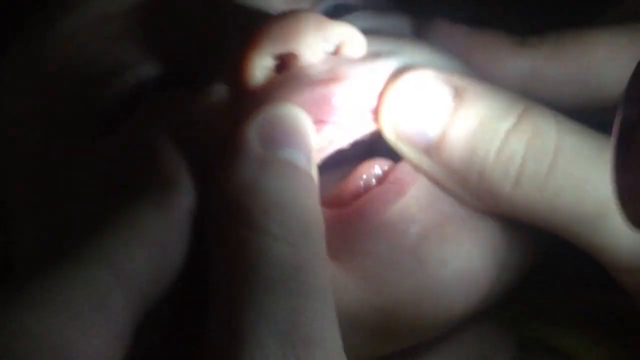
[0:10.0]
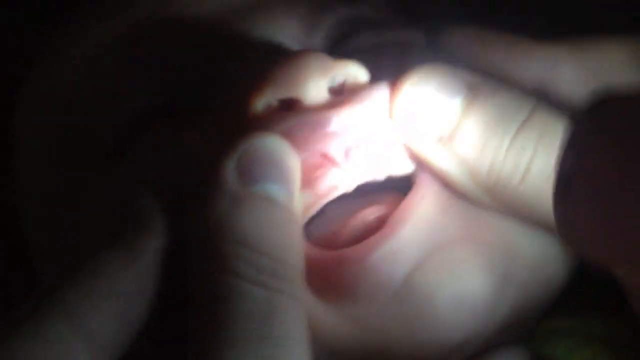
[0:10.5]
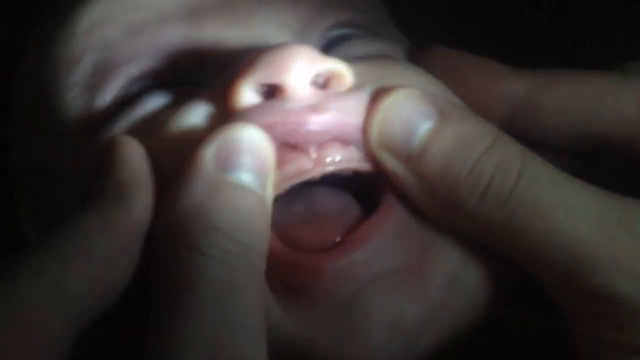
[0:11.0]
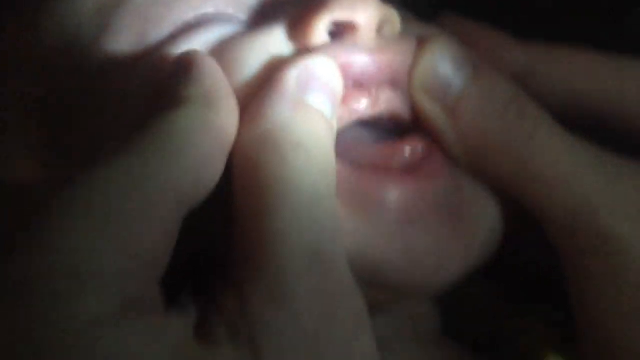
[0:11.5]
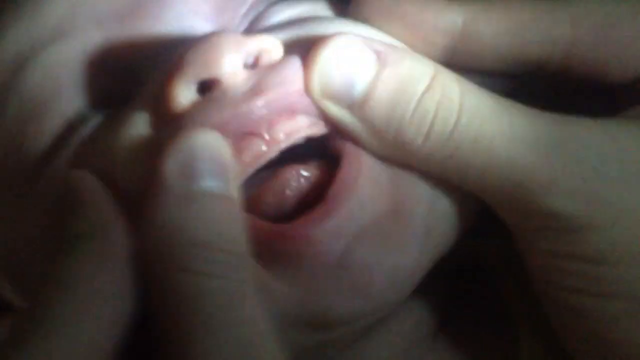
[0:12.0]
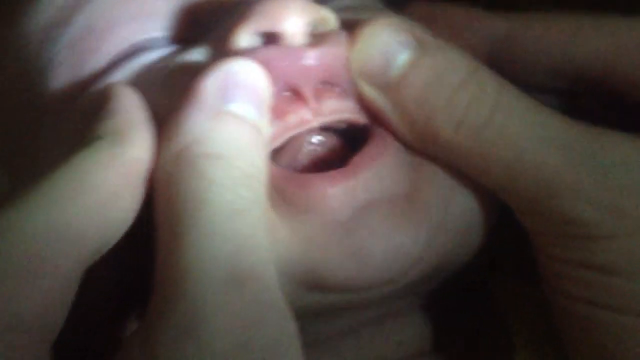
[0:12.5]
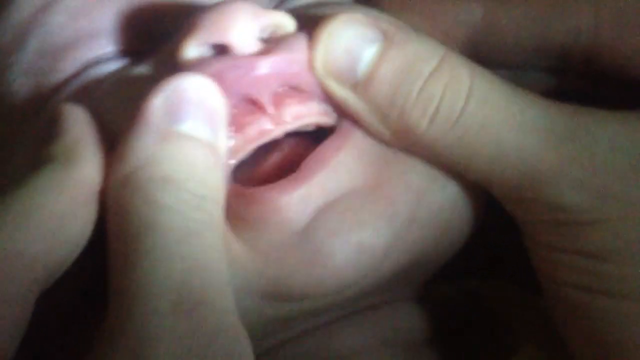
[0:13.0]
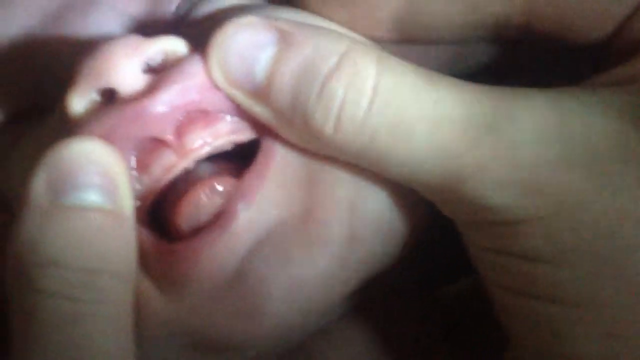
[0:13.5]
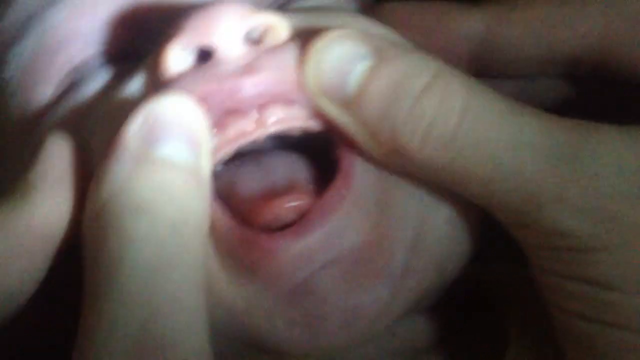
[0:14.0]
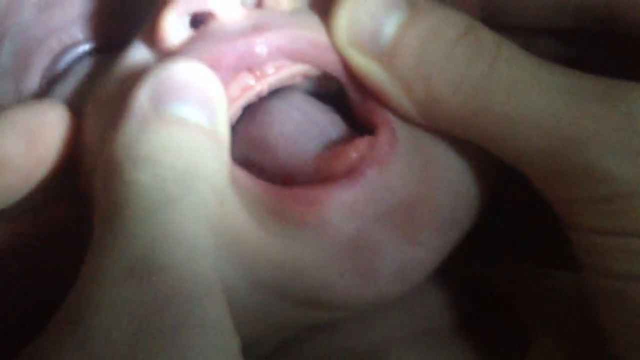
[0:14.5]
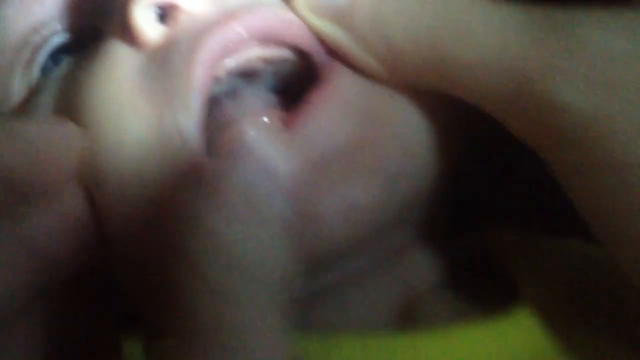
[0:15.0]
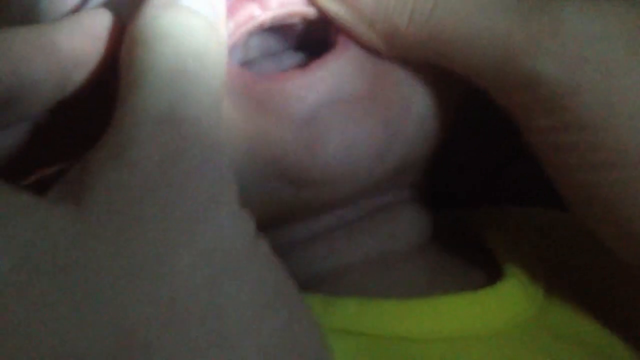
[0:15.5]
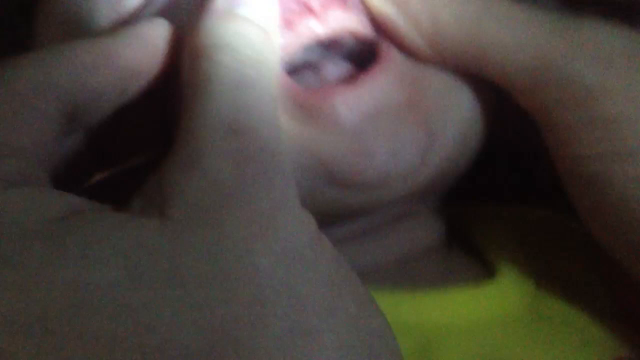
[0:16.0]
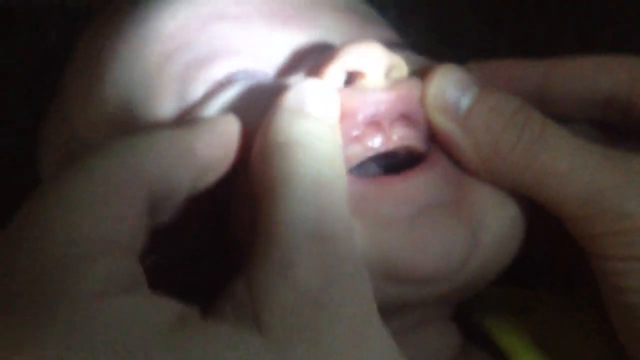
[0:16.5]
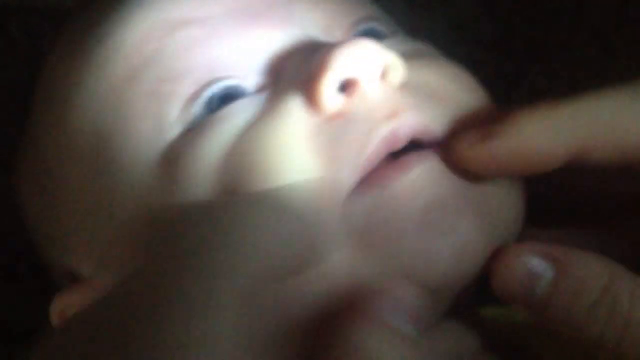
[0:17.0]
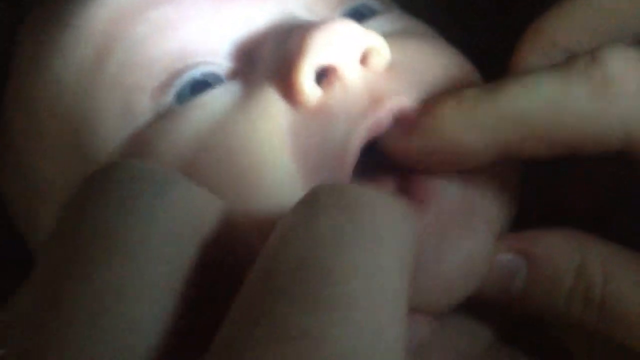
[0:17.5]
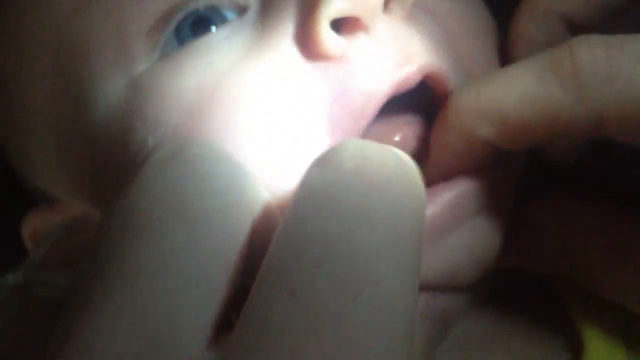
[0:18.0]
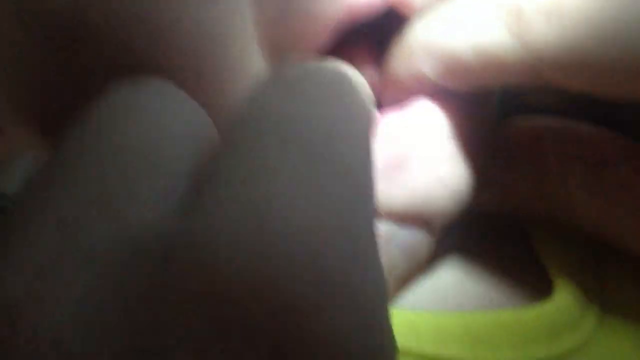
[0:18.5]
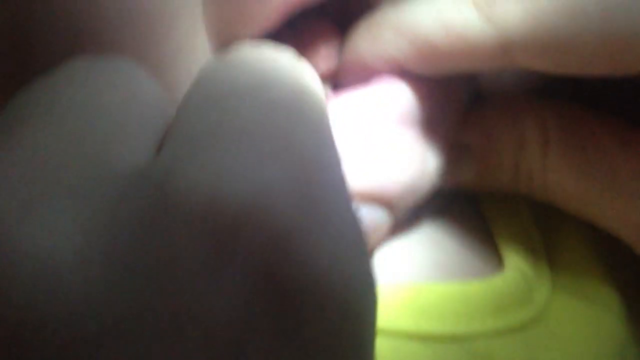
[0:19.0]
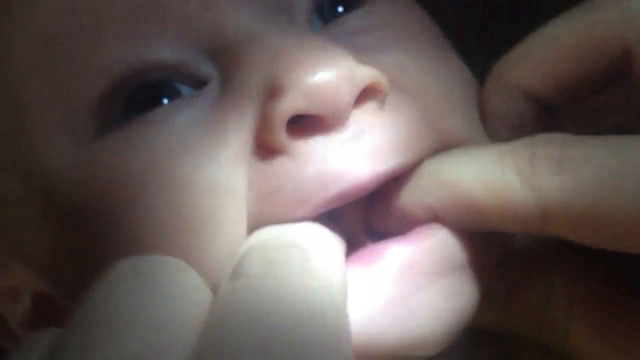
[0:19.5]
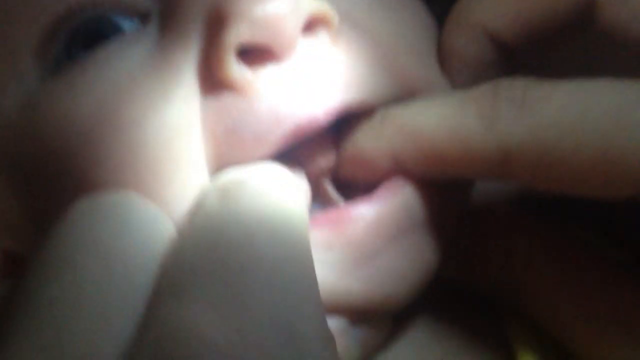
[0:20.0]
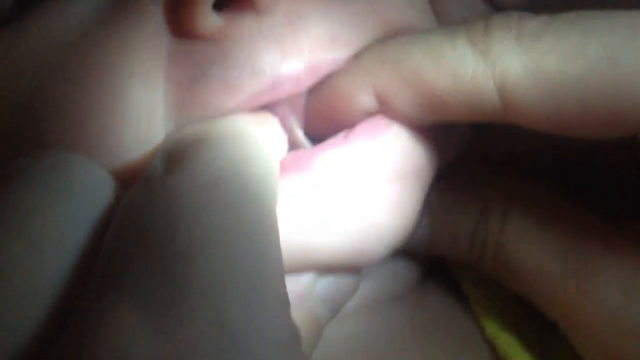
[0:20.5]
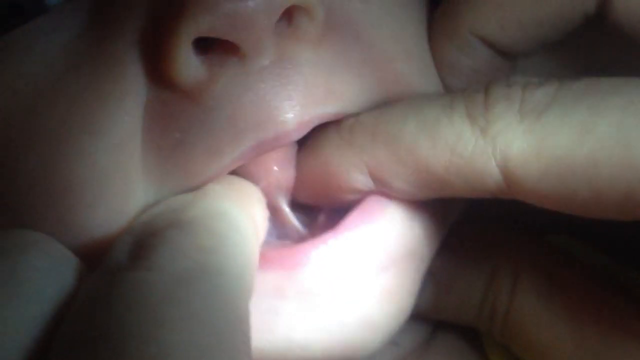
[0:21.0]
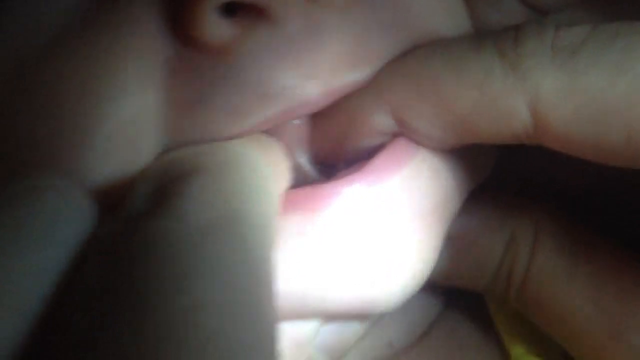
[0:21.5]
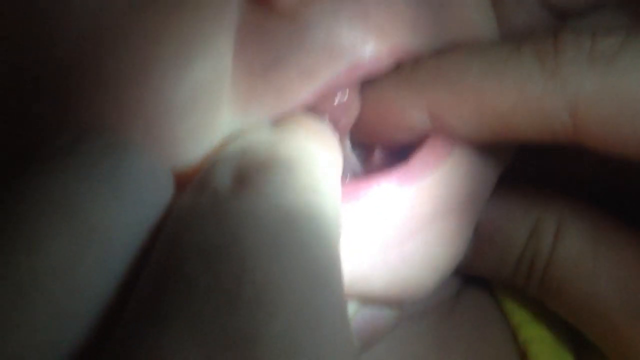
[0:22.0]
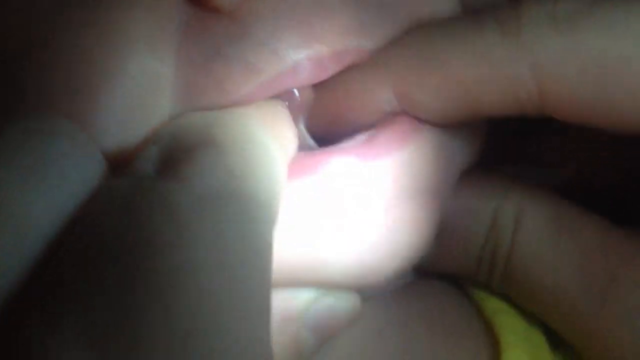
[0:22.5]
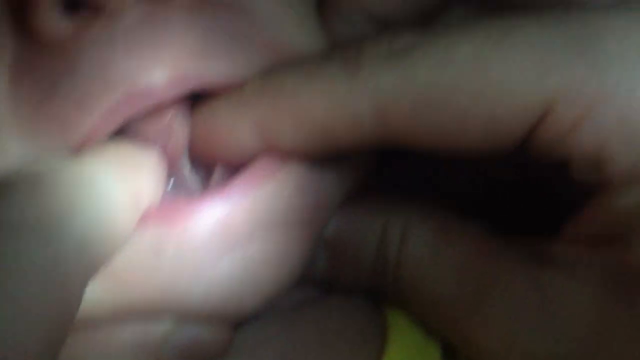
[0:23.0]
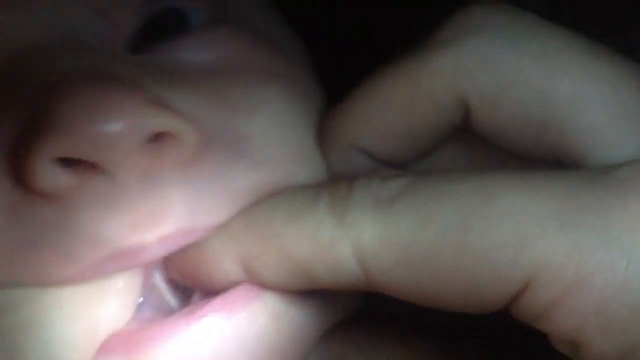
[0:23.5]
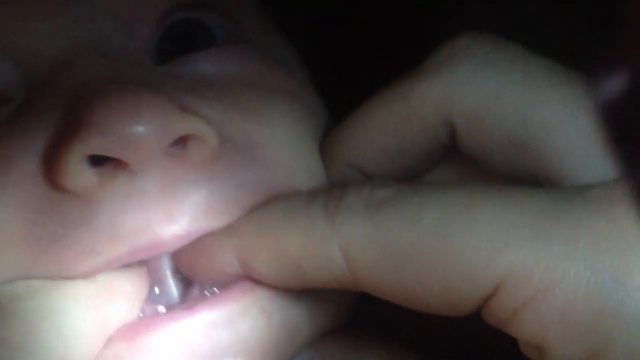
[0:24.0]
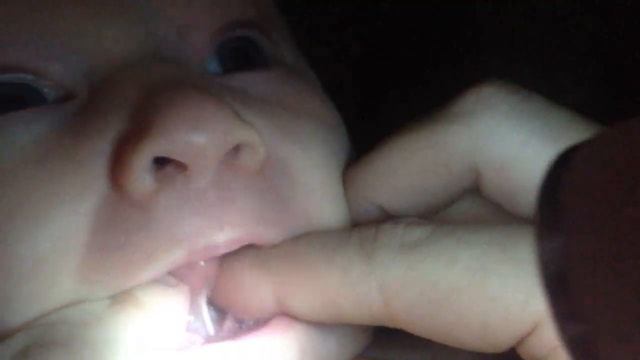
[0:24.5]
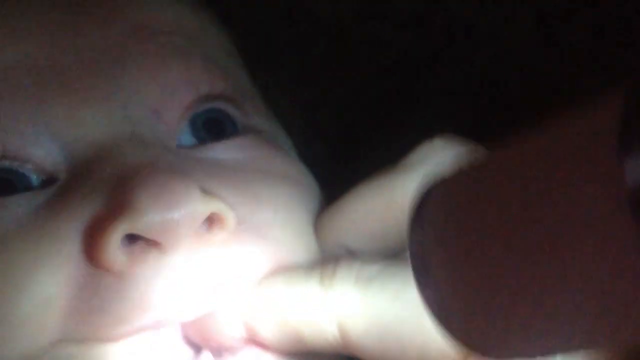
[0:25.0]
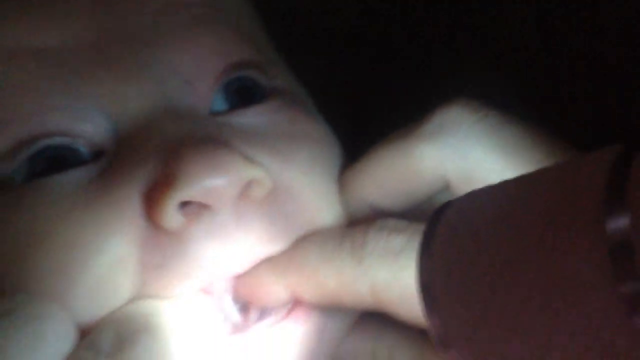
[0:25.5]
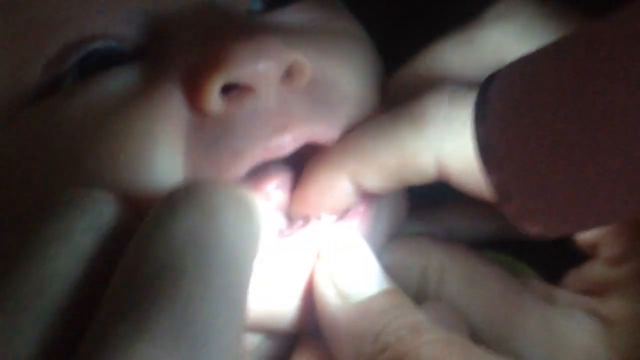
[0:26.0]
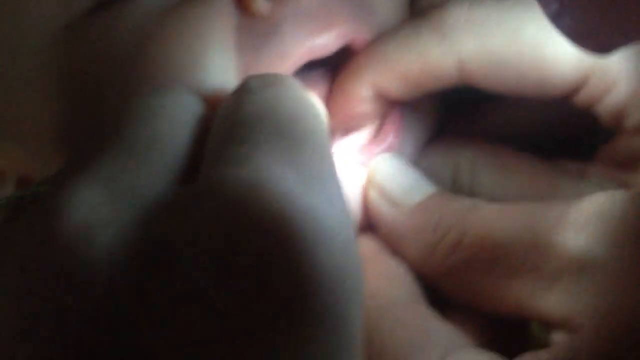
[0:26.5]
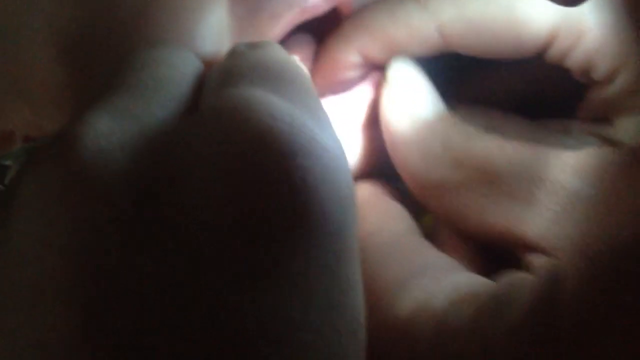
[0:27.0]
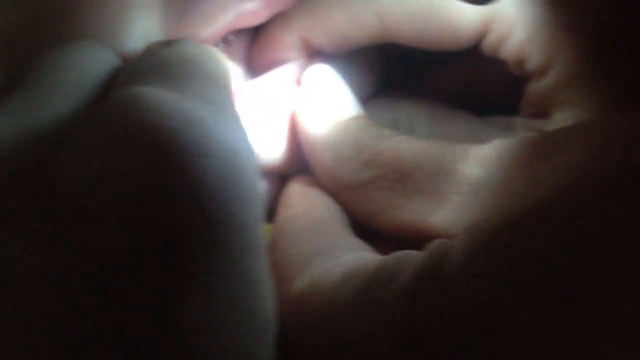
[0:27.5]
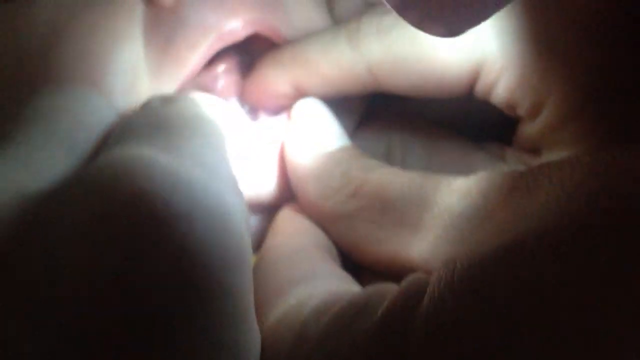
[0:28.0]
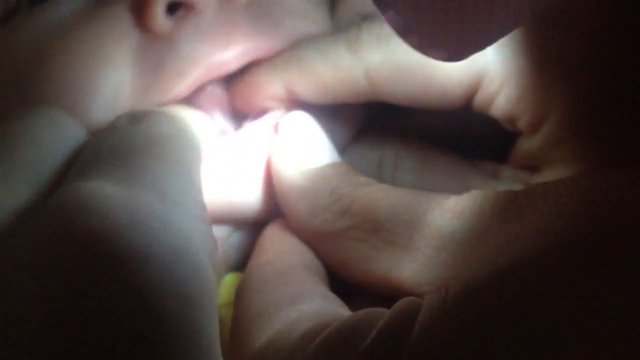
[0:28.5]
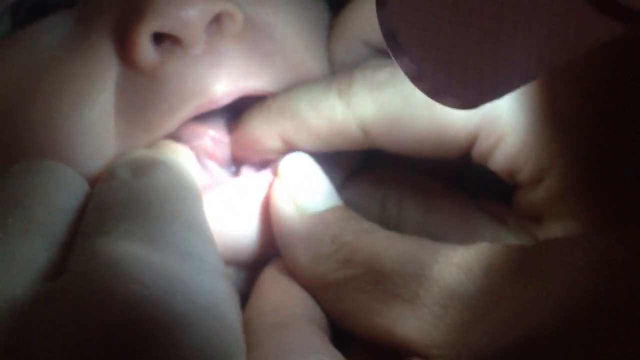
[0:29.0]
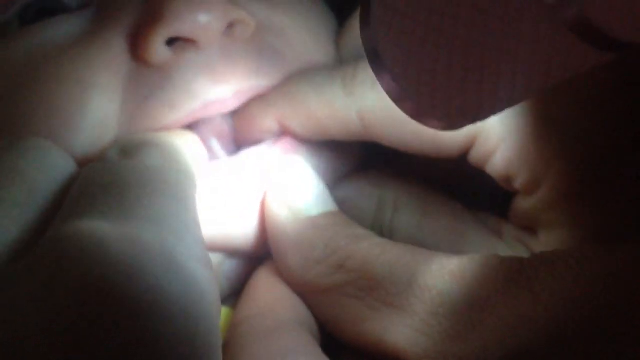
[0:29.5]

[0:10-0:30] A young baby's top gums are examined in close-up. Someone holds up the baby's top lip so it touches the bottom of the baby's nose, using two thumbs to push the lip up on the left and right sides. The gum area appears to have kind of like marks where teeth should be, but there appear to be no teeth. Someone shines a flashlight at the baby's mouth; the baby kind of has its eyes closed, and its little tongue moves around in its mouth. A closer look at where the two front teeth should be shows pink gum that is kind of in the shape of a tooth and turns white toward the bottom, so it kind of looks like teeth are stuck in the gums with a layer of flesh covering them. The person then puts the baby's lip down and puts their two index fingers in the baby's mouth, kind of looking like they are holding the left and right sides of the baby's tongue. A little long, thin, whitish connector line is visible underneath the tongue. The baby has its big blue eyes open, staring ahead, as its mouth and tongue kind of squirm around a little, although the baby seems relatively calm.